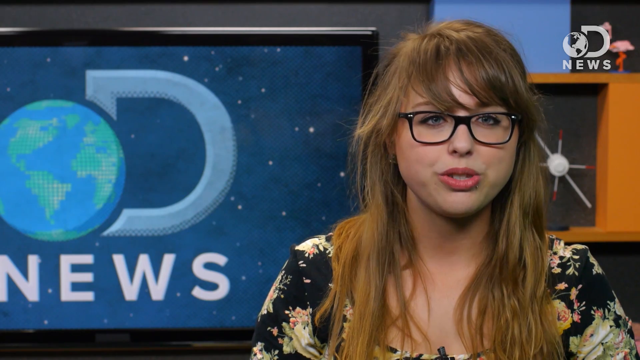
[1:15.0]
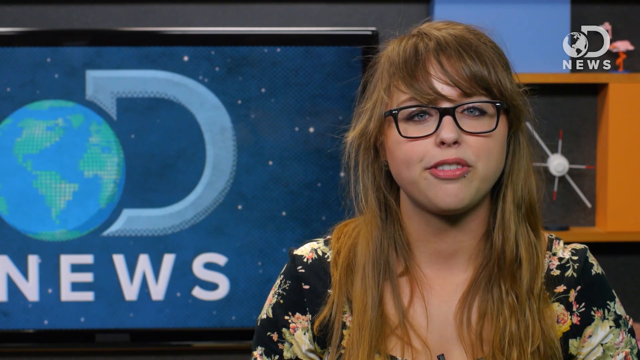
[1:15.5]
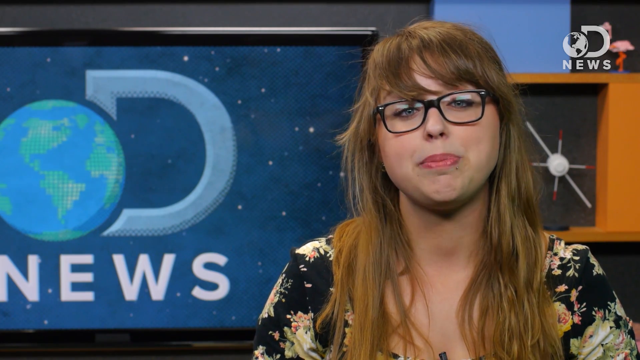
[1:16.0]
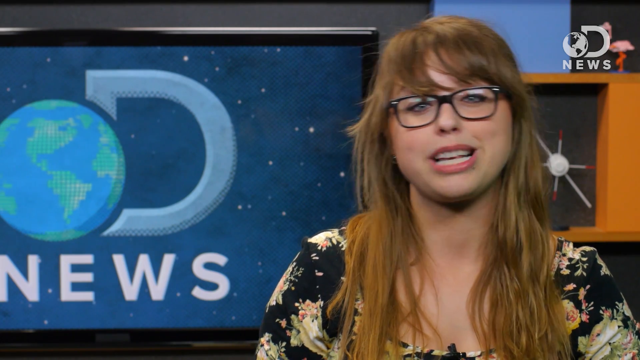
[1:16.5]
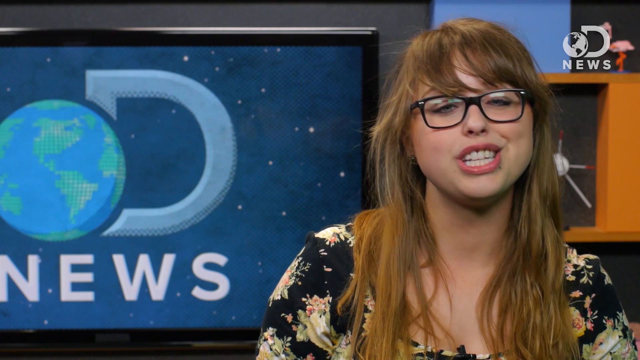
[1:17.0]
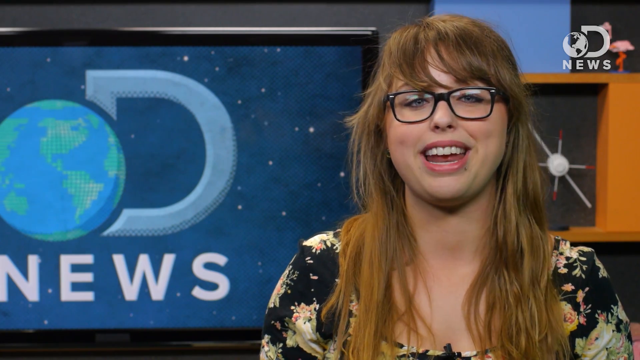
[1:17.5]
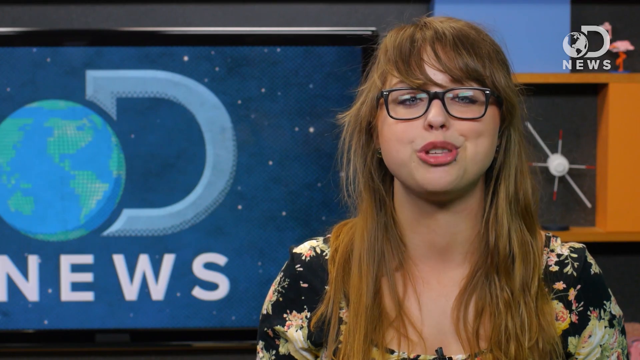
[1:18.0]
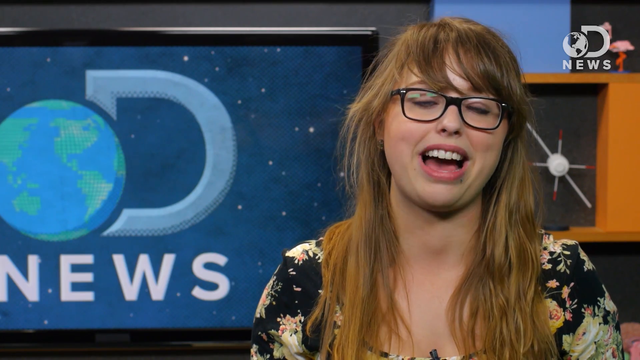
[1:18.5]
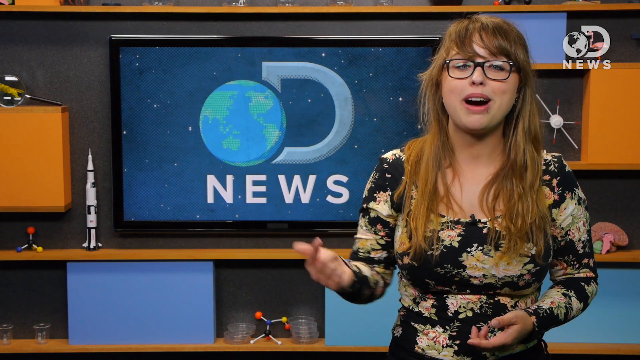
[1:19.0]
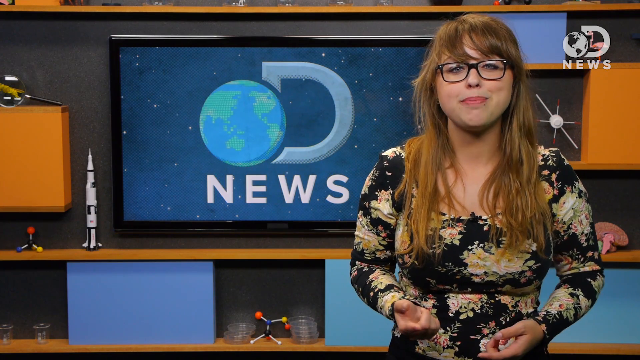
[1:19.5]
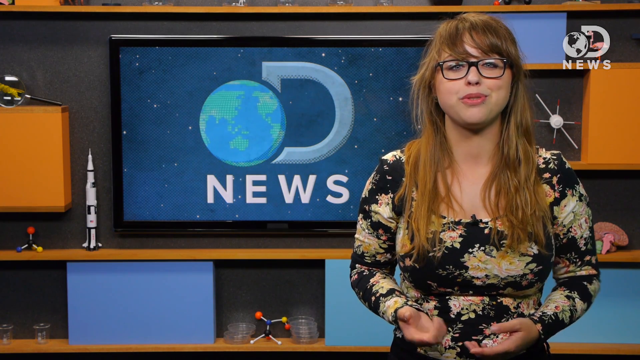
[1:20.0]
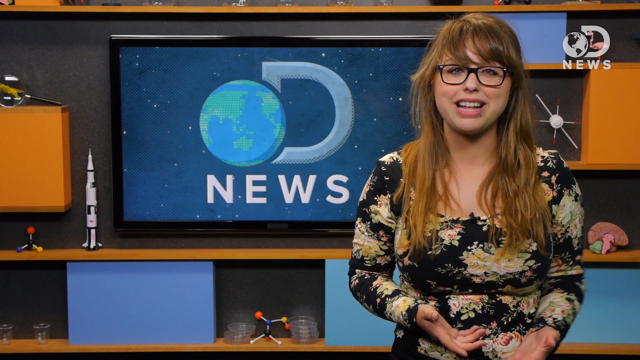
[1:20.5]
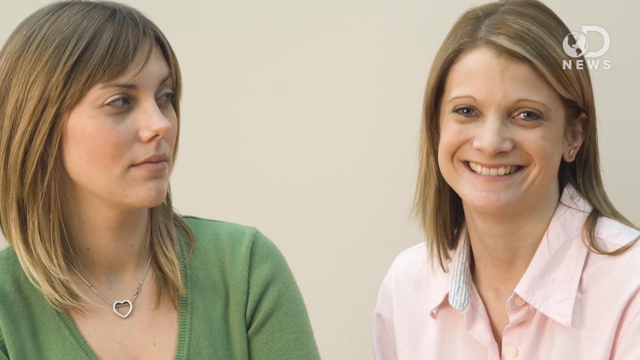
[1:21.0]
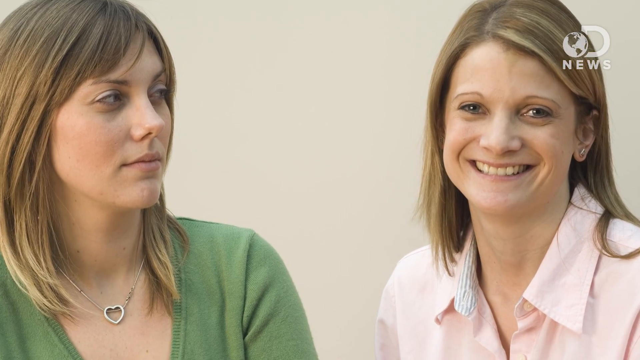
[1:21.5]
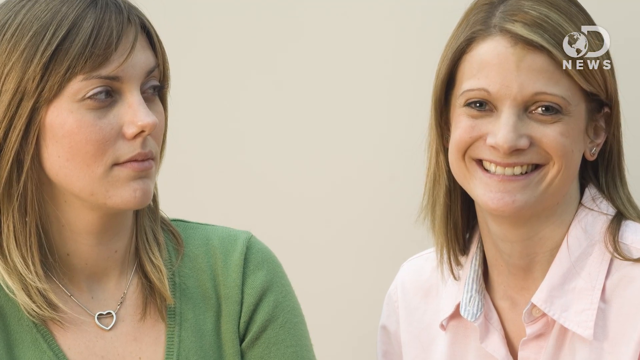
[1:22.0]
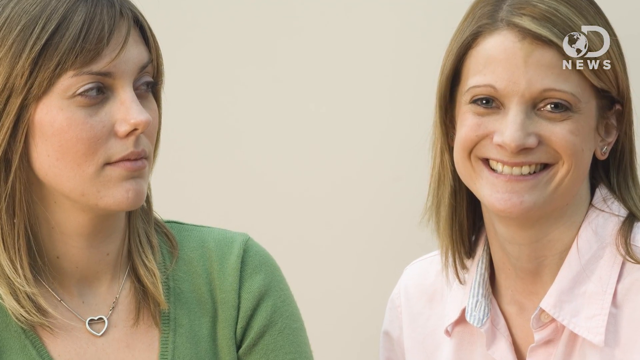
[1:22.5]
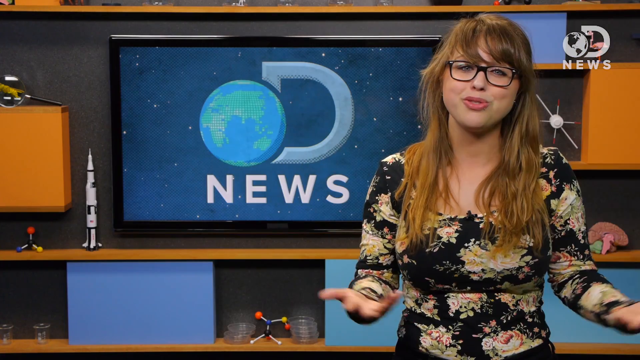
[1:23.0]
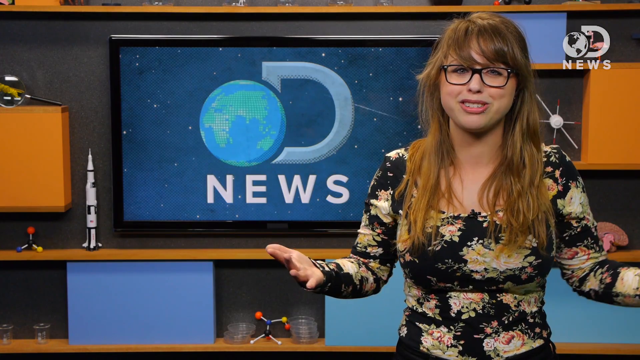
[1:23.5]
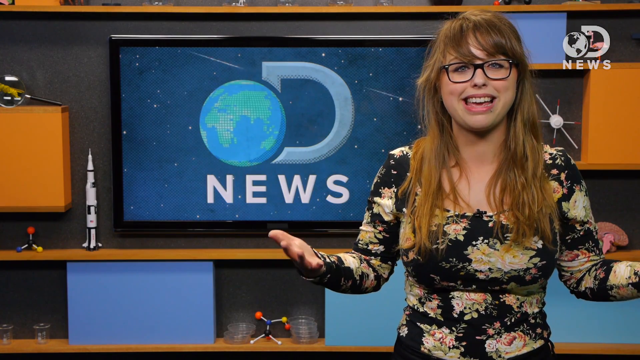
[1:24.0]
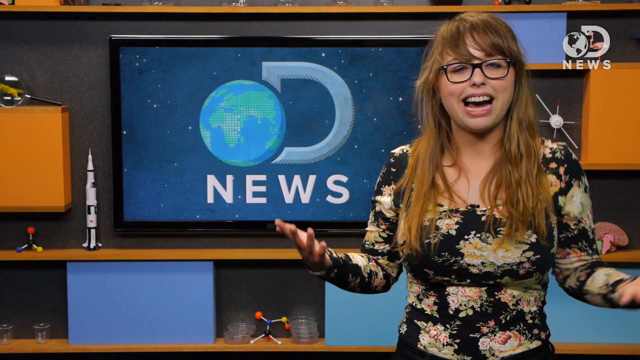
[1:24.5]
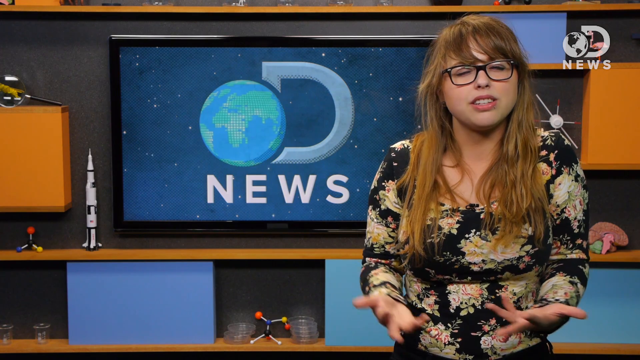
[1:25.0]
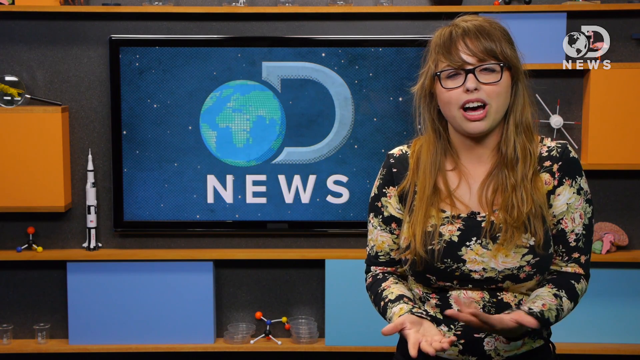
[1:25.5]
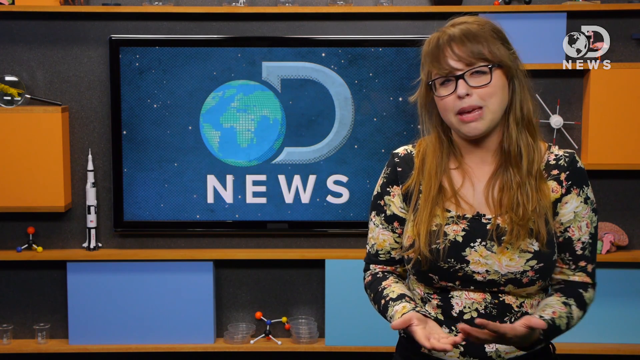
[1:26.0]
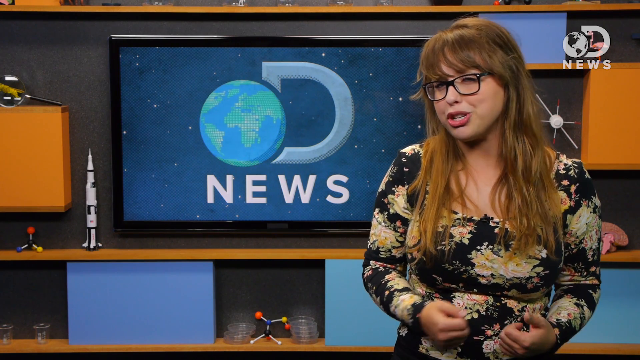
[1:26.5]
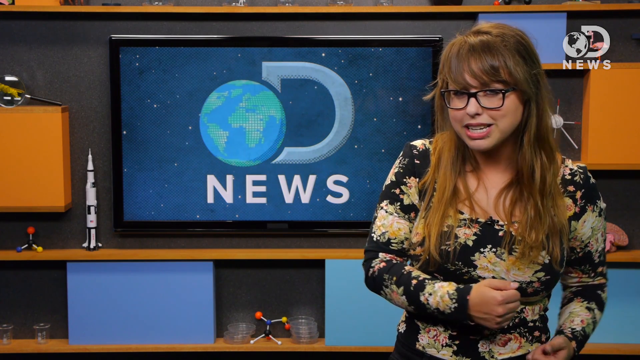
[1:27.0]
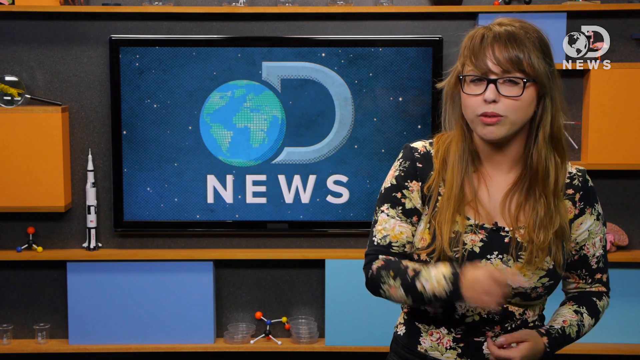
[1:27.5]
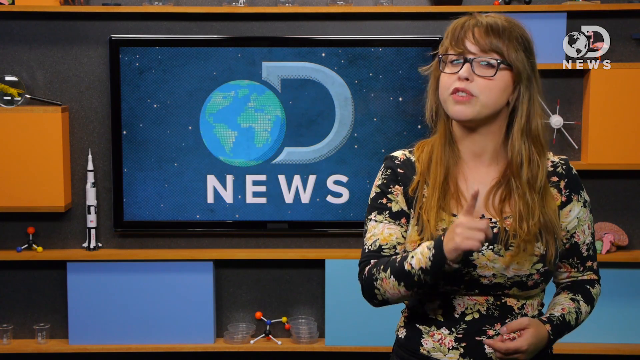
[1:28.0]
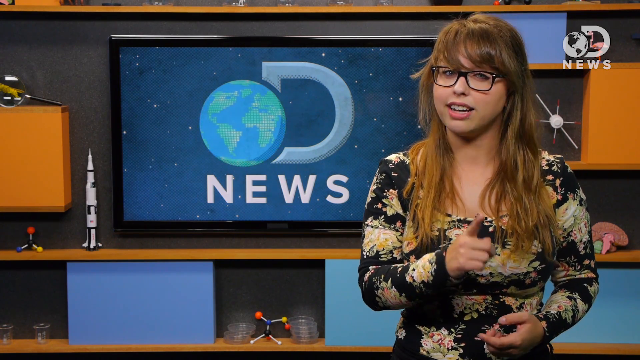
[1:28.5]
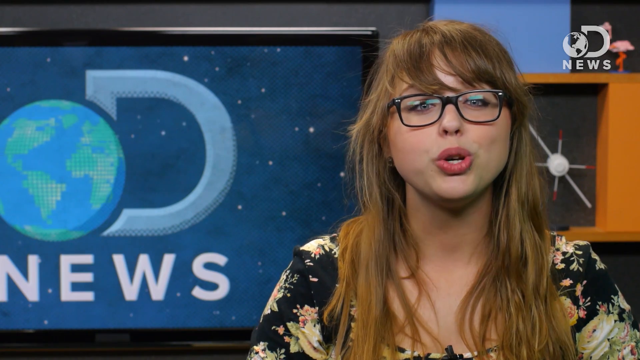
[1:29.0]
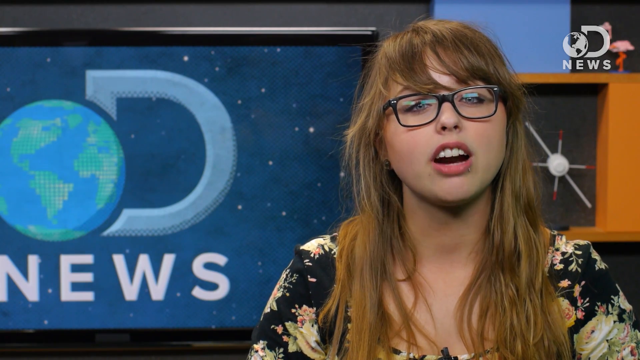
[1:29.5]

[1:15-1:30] A close-up shows the woman talking to the camera. She wears black glasses and a black dress with white flowers, and has orange-brownish hair down to her chest. To her left behind her is a large television with the letter D, and next to the D is a very blue and green earth symbol with the word "news" below it. Behind her to the right are some orange box-shaped things and a blue box shape, and a pink flamingo is on one of the shelves. The view then changes to a different angle, where the woman is still talking and more of the screen is visible, including a spaceship toy on the left side. The scene switches to two white women. The woman on the right looks directly at the camera and smiles; she has brown hair down to her shoulders and wears a pink shirt. The woman on the left looks at the woman on the right; her hair is slightly longer, down to her collarbone, and she wears a heart-shaped necklace and a green shirt. The video goes back to the original woman making hand motions as she talks, followed by another close-up of her. A zoomed-out view behind the woman shows many blue box shelves along the very bottom.